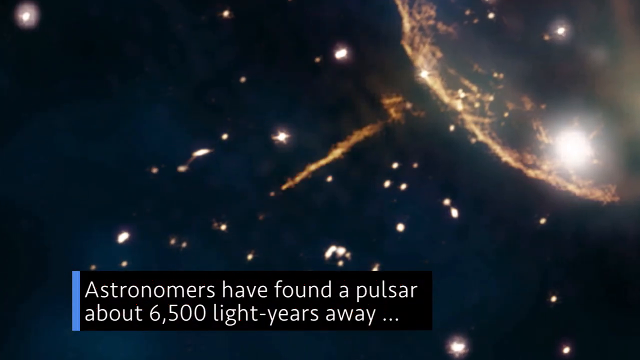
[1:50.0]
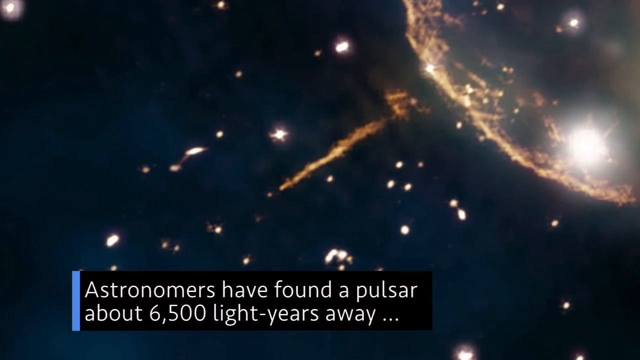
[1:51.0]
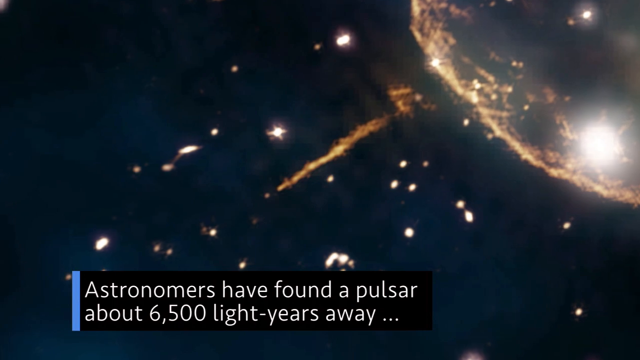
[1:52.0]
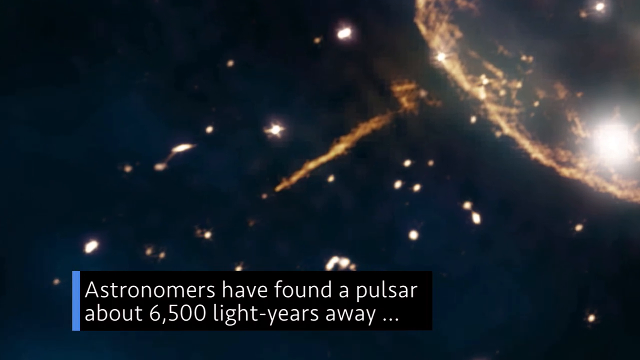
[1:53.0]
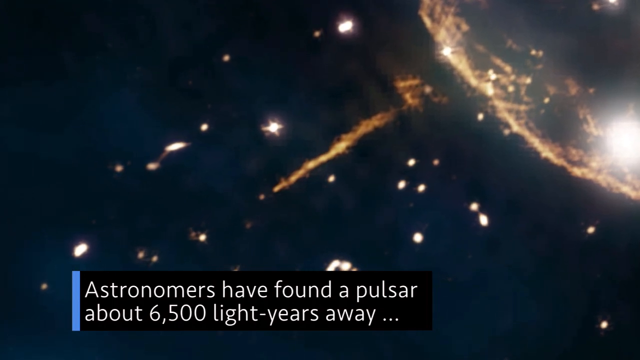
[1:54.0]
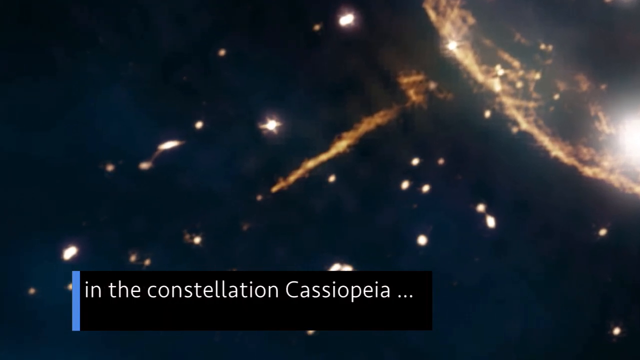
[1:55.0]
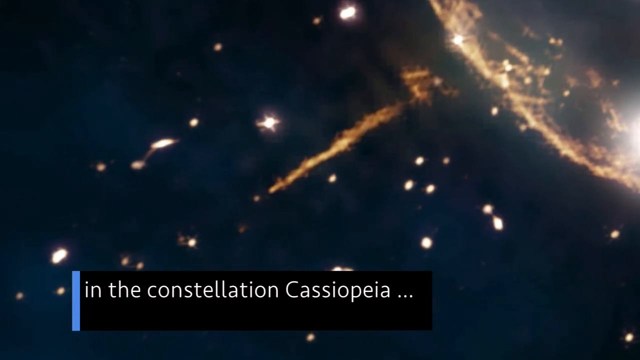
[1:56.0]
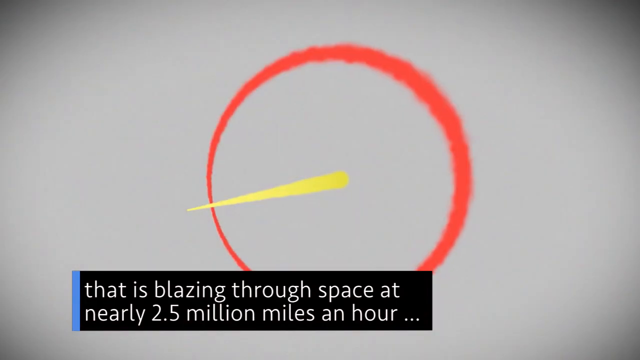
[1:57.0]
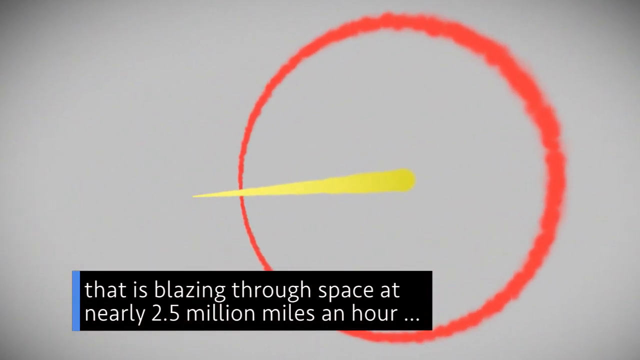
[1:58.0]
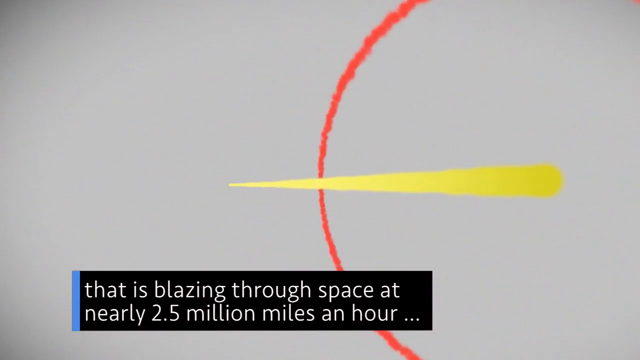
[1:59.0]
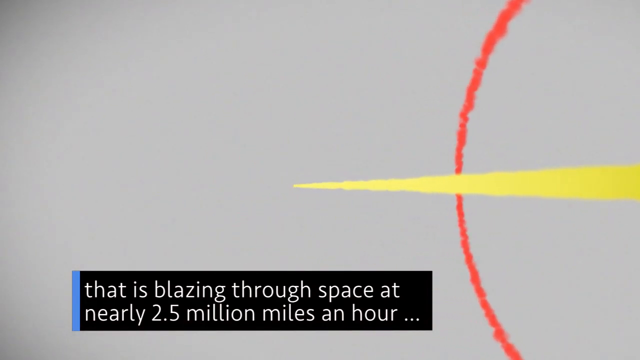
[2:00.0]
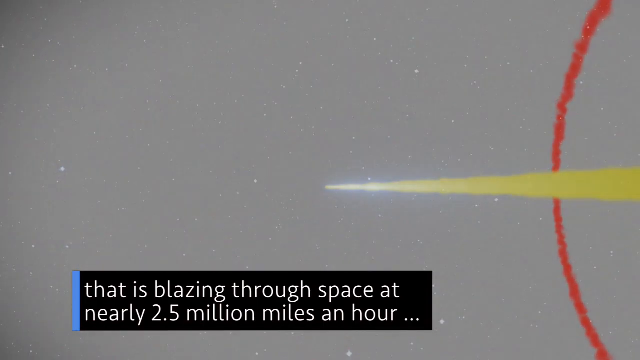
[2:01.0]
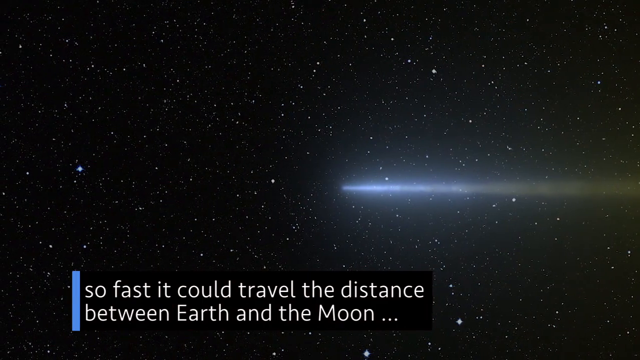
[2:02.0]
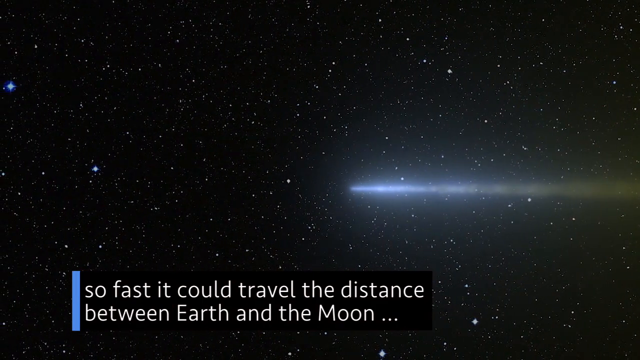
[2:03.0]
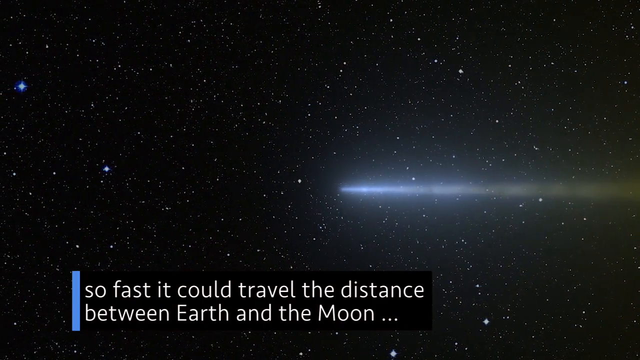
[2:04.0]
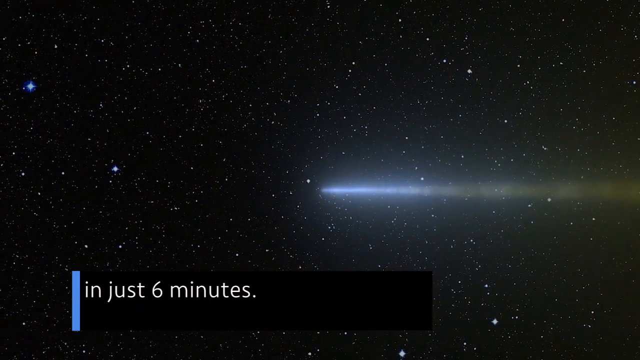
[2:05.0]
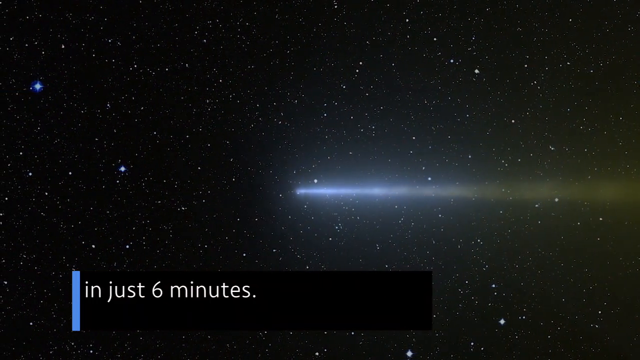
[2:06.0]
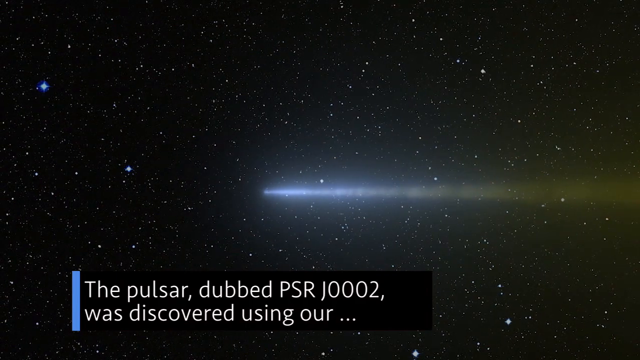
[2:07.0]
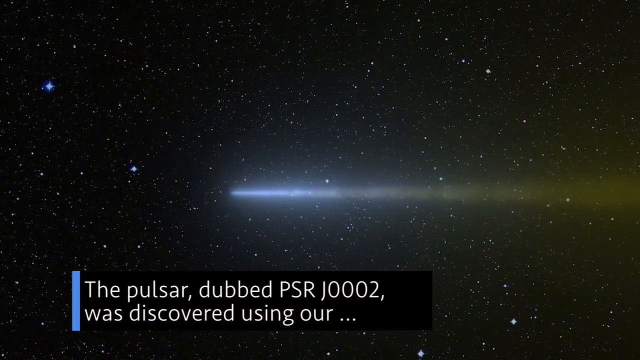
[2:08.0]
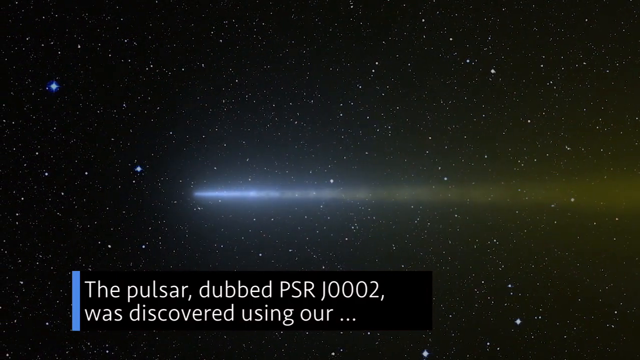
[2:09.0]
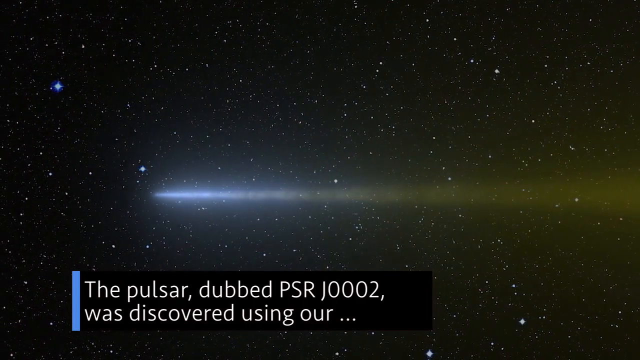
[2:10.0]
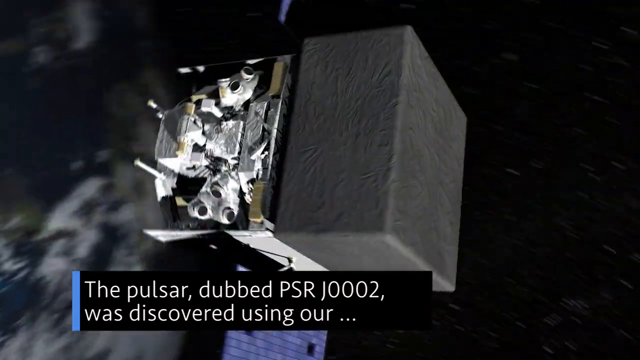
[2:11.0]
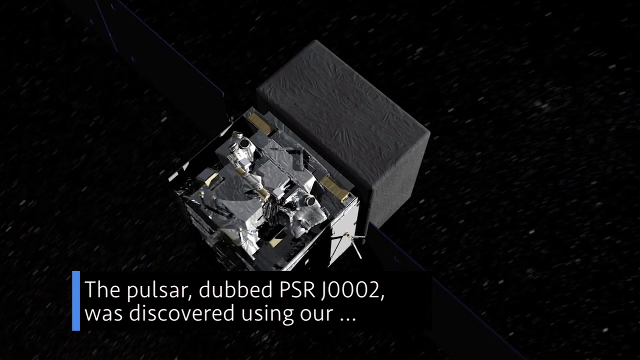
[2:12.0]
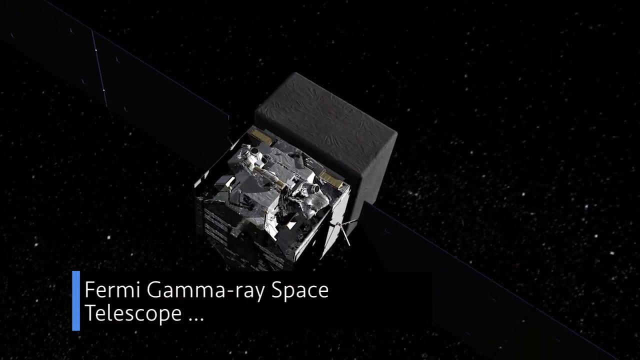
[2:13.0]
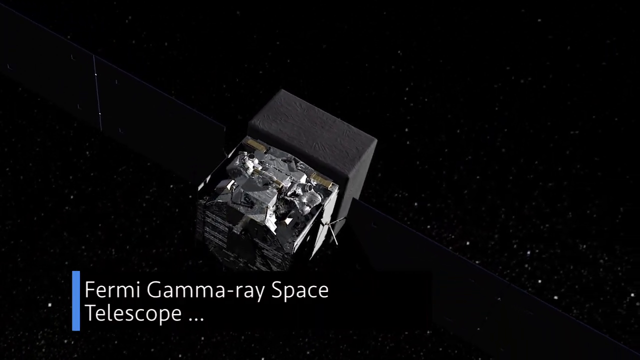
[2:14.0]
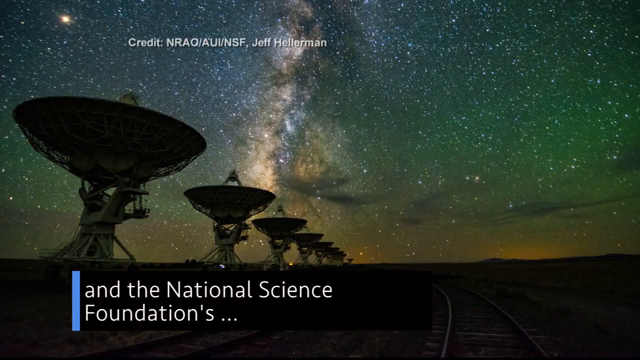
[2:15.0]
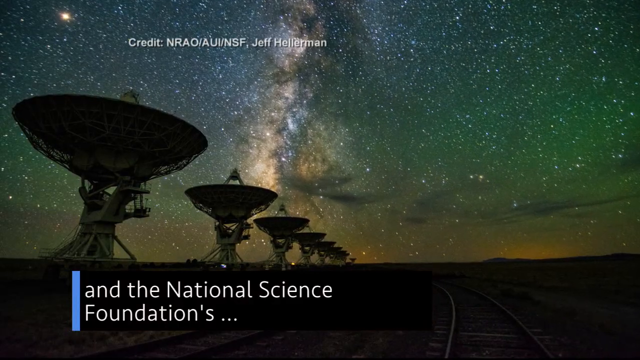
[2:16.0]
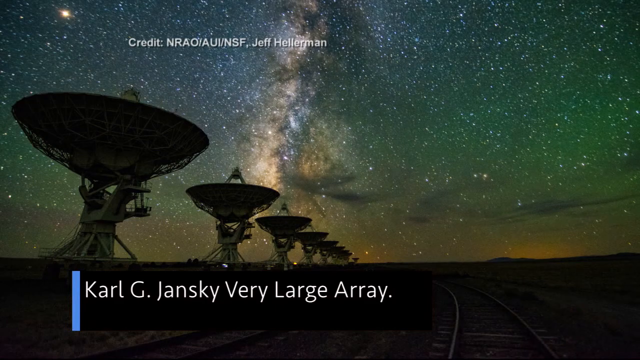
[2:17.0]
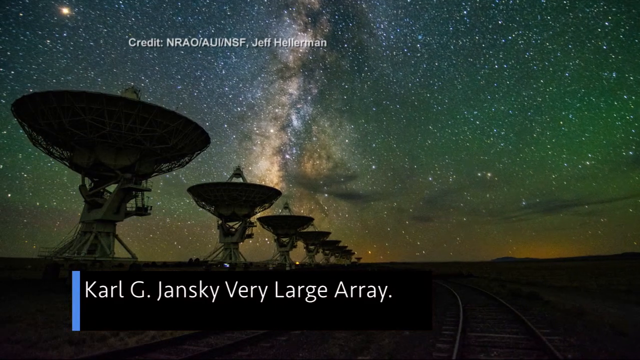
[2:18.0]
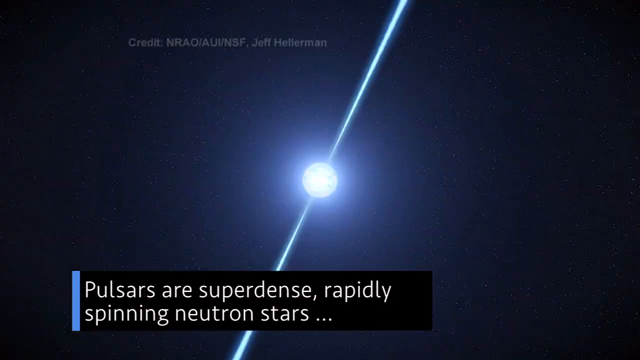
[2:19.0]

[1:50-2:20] An image of an object in space appears on the right. Text says astronomers have found a pulsar about 6,500 light years away, blazing through space at nearly 2.5 million miles an hour; the image on the right is apparently a depiction of the pulsar. Text says the pulsar, dubbed PSR J0002, was discovered using the Fermi gamma ray space telescope, and an image of the space telescope floating through space follows. A group of satellites on the ground on Earth is then shown, radio satellites pointed up into the sky.